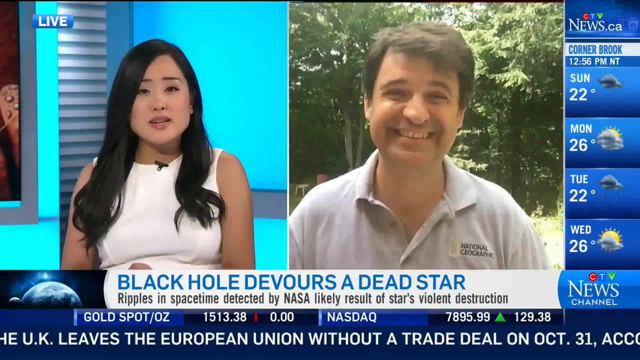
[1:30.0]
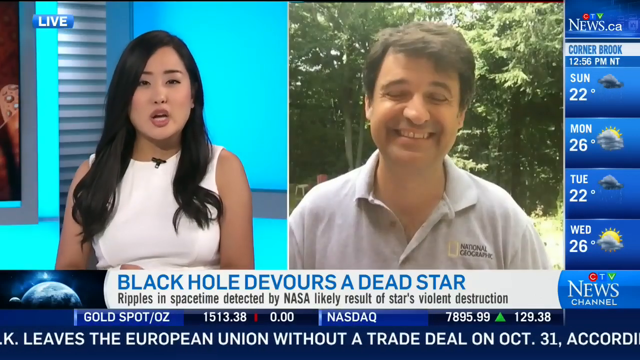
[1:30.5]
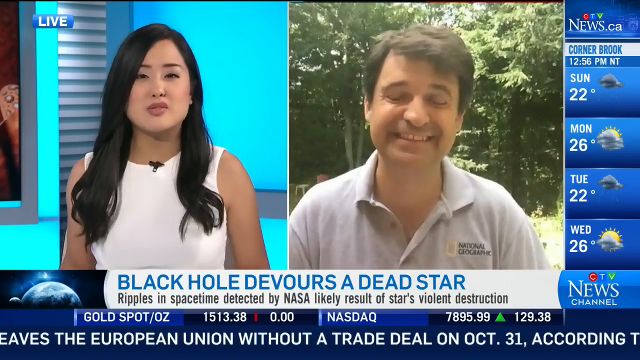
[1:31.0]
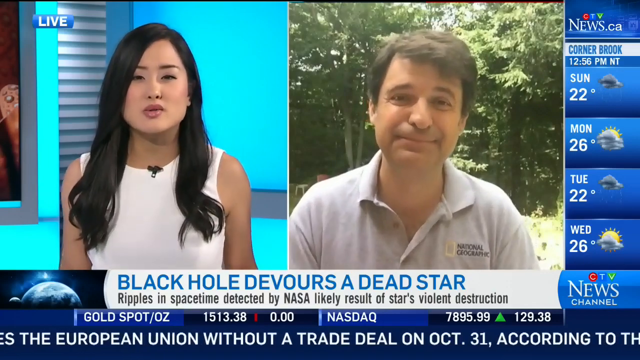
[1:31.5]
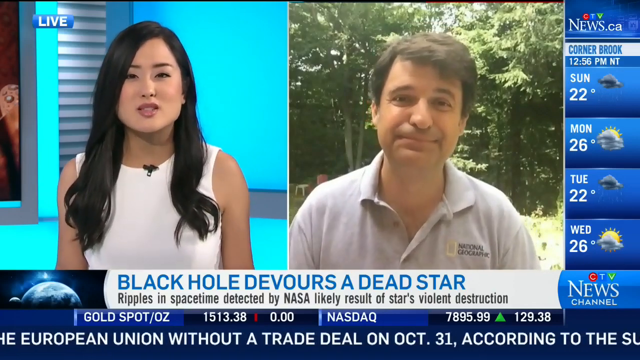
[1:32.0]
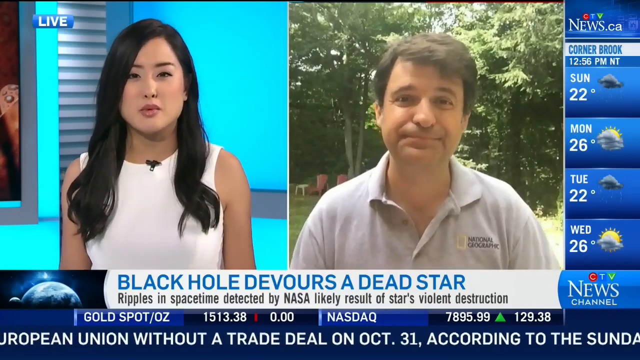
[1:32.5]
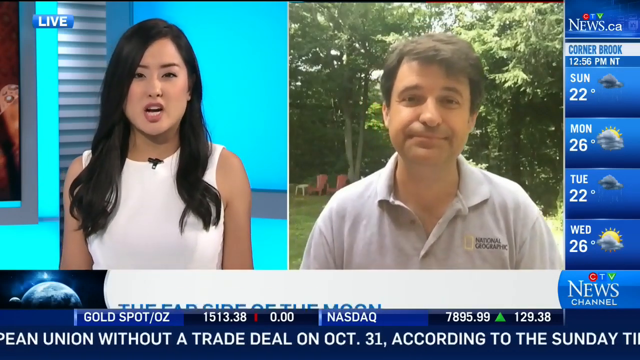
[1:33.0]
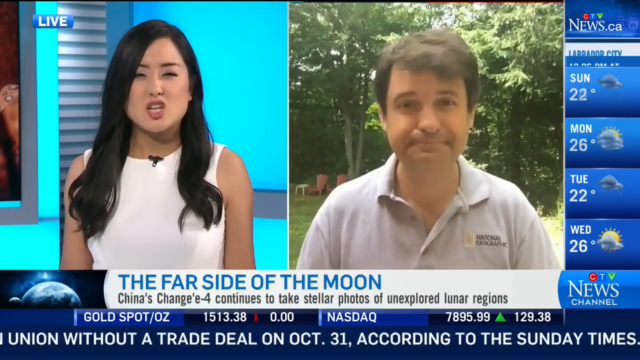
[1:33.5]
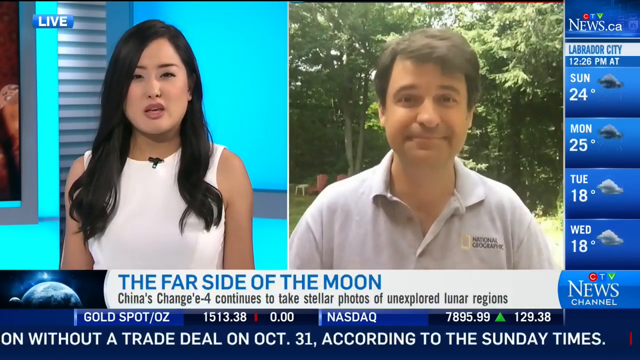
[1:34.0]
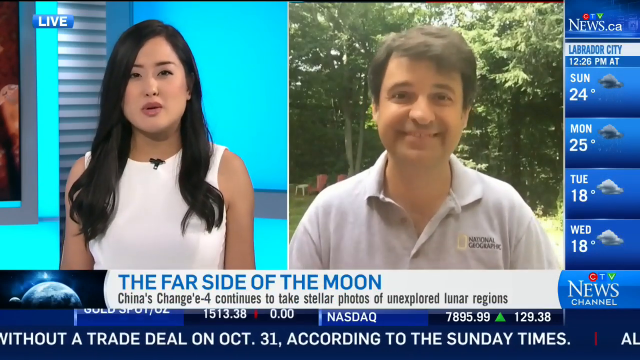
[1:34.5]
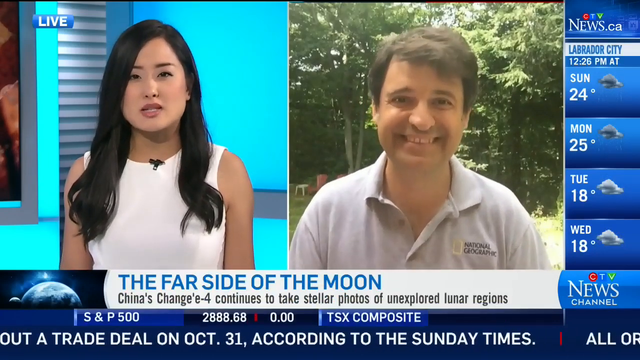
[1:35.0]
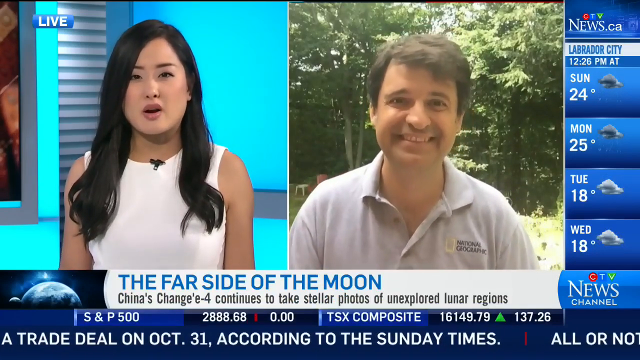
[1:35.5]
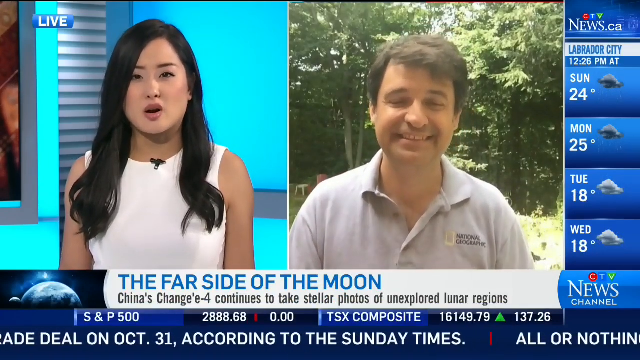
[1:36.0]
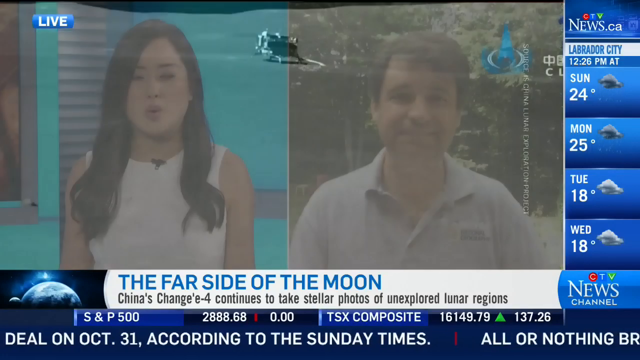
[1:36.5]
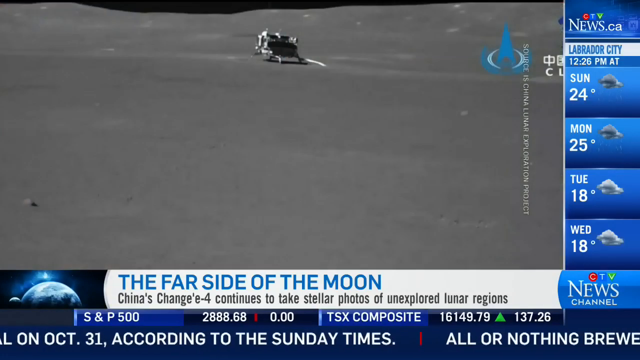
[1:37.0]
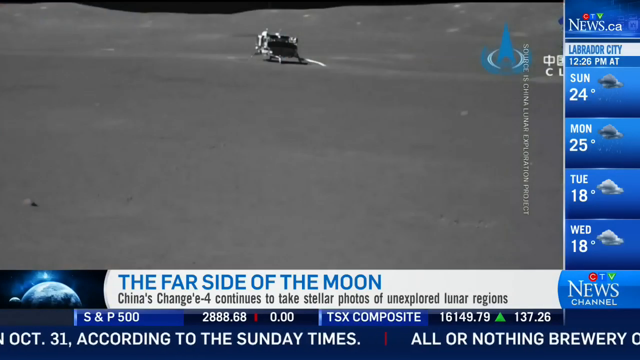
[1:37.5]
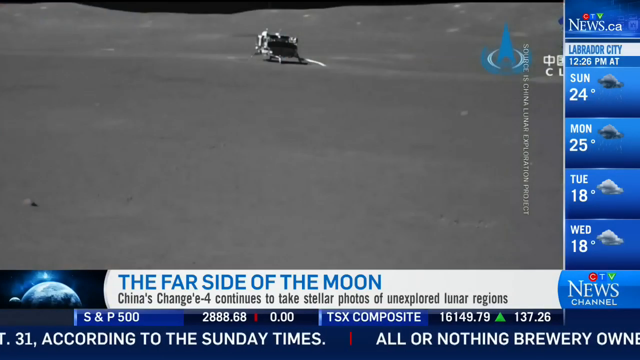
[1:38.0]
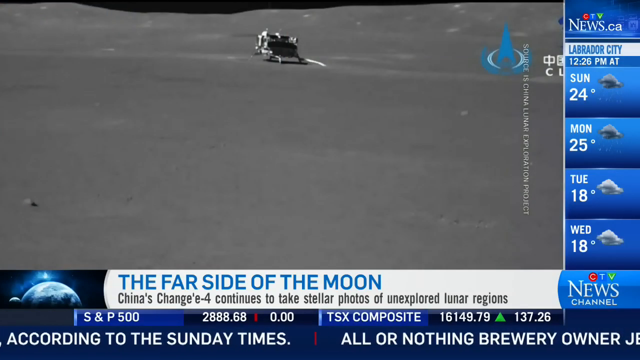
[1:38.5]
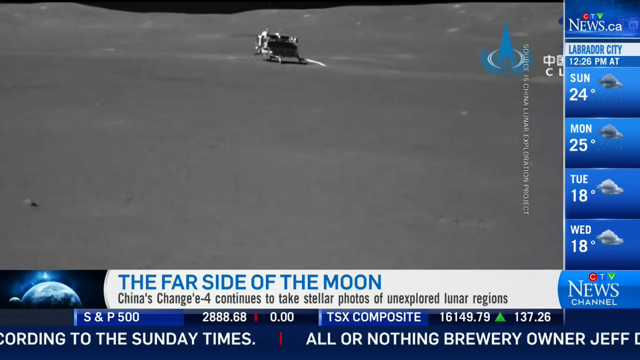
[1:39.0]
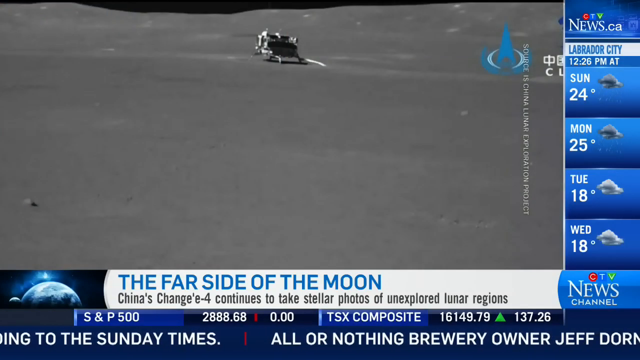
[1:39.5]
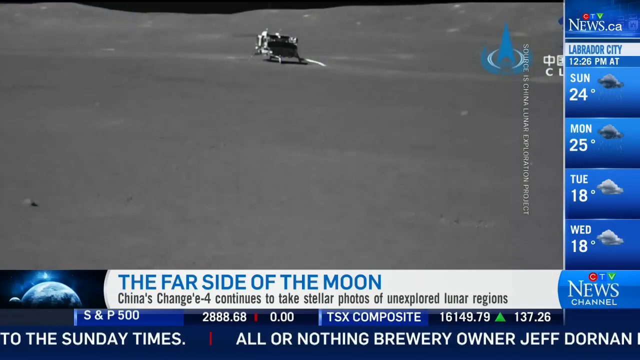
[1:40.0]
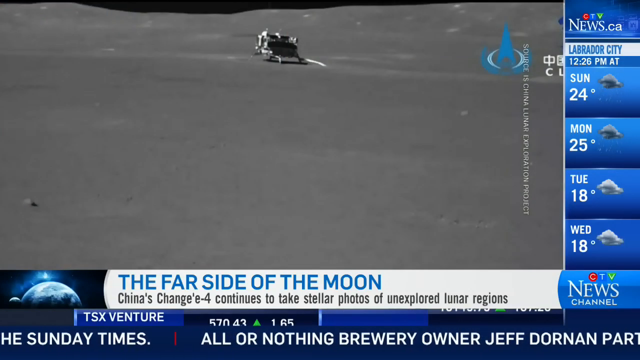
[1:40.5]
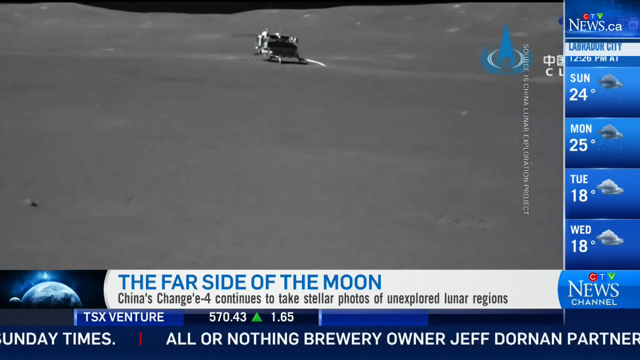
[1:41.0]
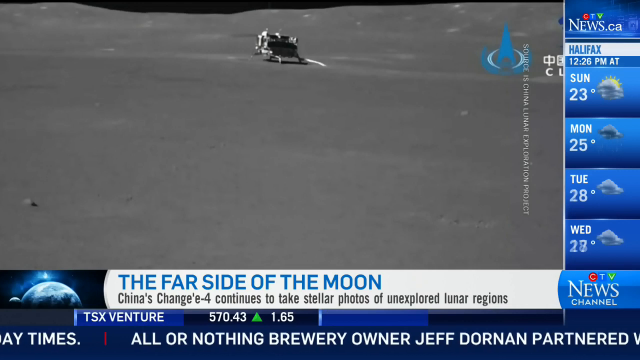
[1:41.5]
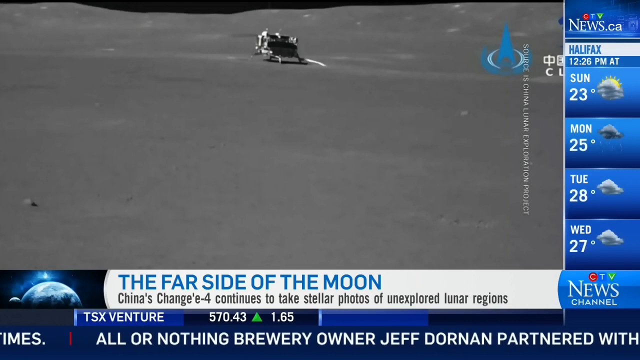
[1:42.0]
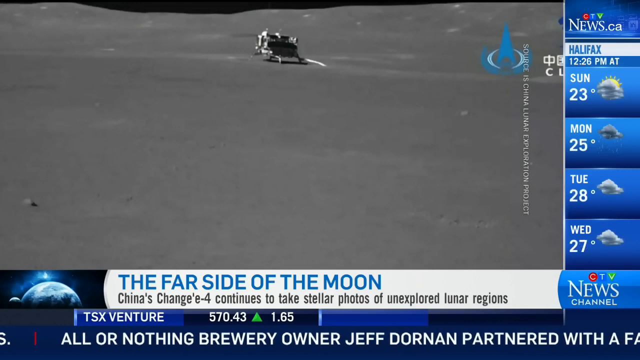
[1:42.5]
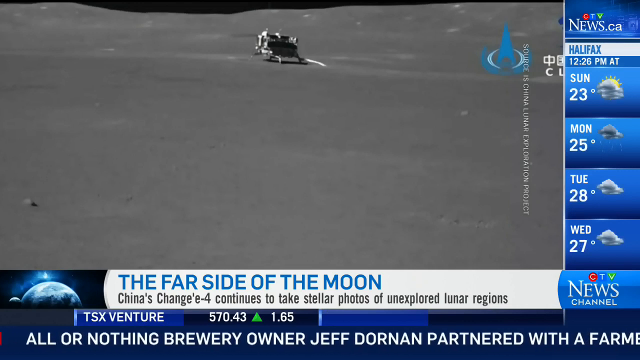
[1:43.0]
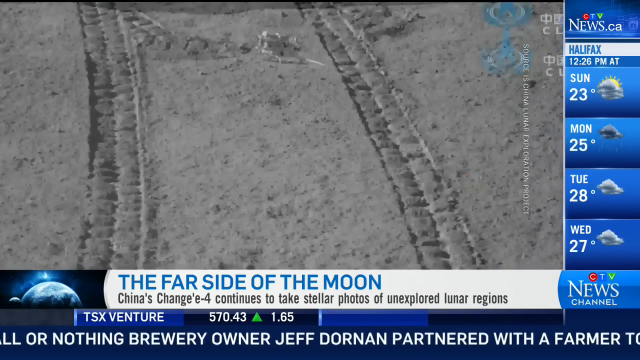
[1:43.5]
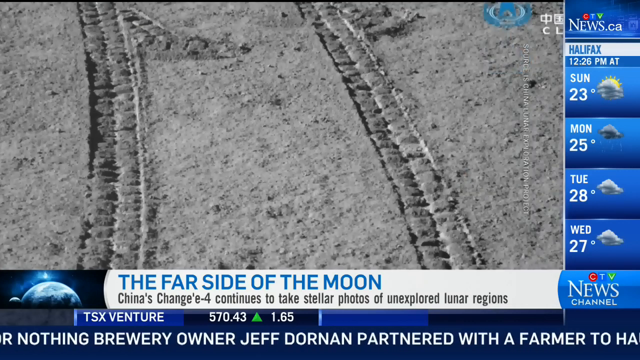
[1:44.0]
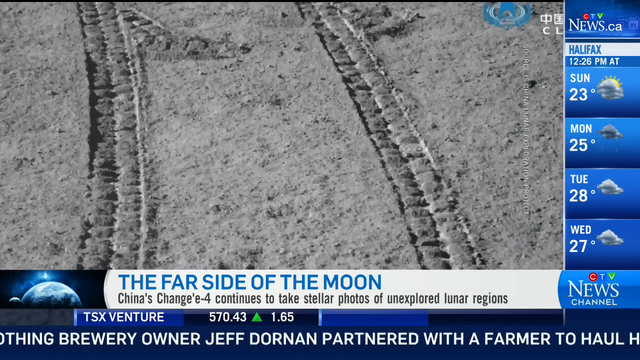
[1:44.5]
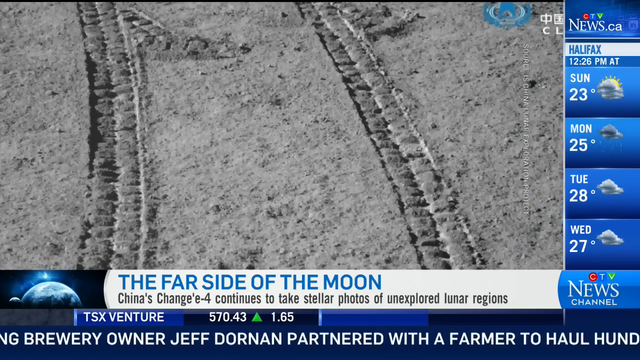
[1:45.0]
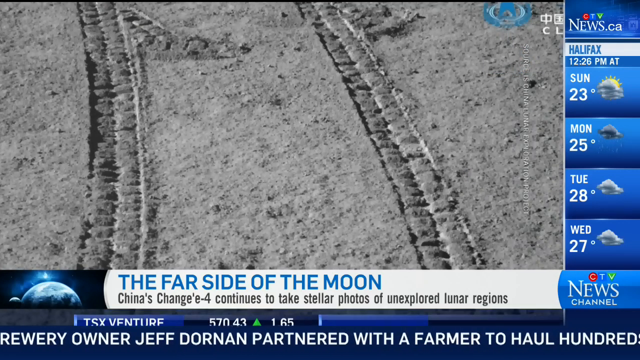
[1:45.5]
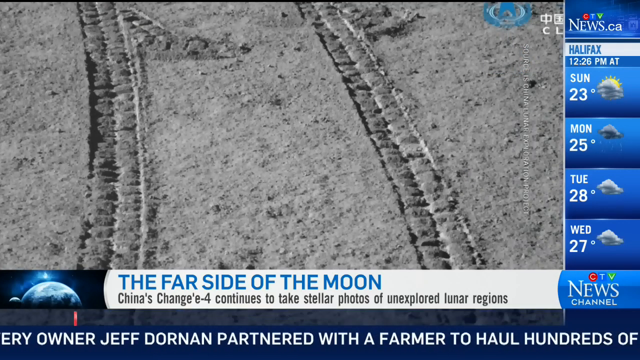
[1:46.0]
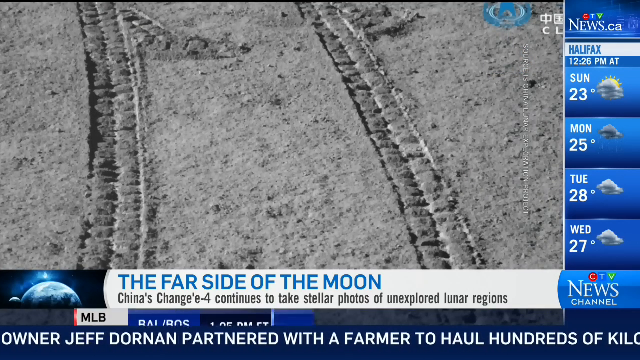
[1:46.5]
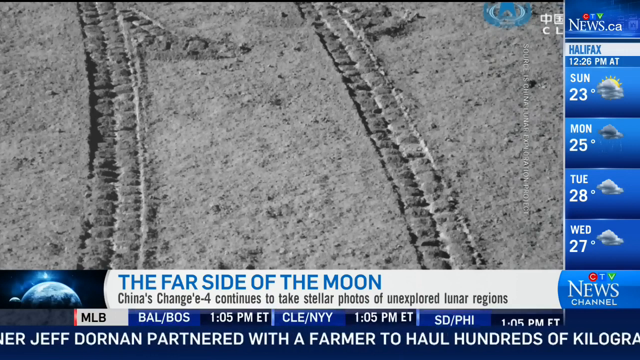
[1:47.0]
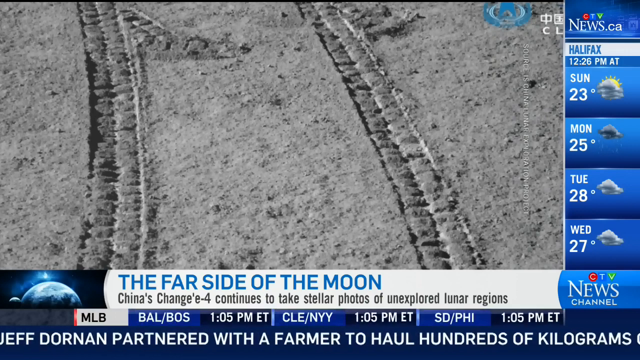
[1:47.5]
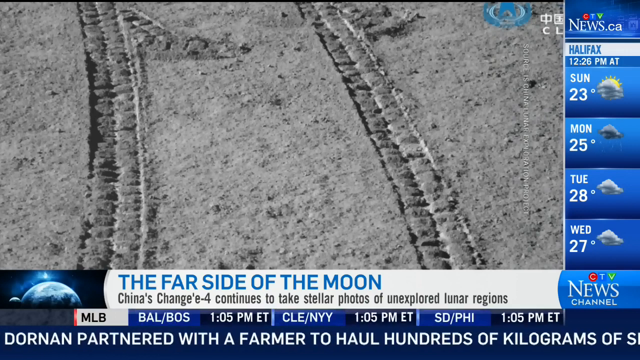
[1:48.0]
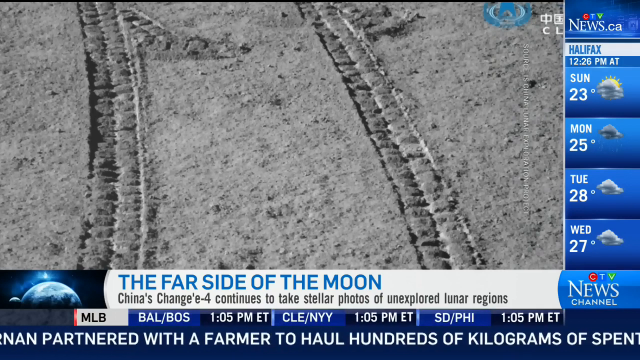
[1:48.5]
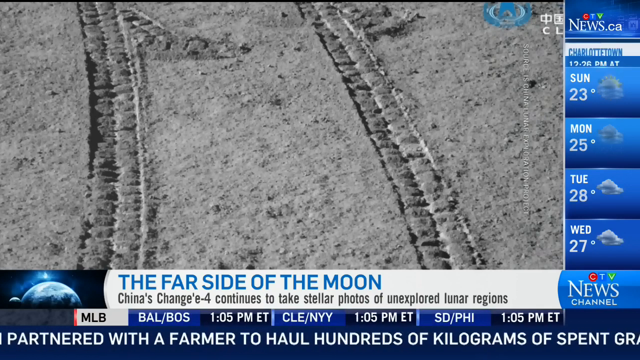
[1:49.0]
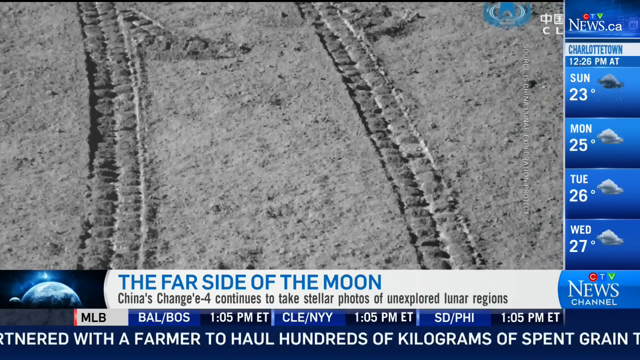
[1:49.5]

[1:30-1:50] The news anchor seems somewhat surprised and concerned as she talks to the expert and kind of questions him. The banner changes to read "the far side of the moon, China's Chang'e 4 continues to take stellar photos of unexplored lunar regions." A picture of what seems to be a side of the moon is shown, a region being explored by the Chang'e 4, which seems to be a rover from China taking photos. The photos are somewhat low quality but clearly show the moon in grey and white. Briefly, photos show the tracks of what seems to be the rover.